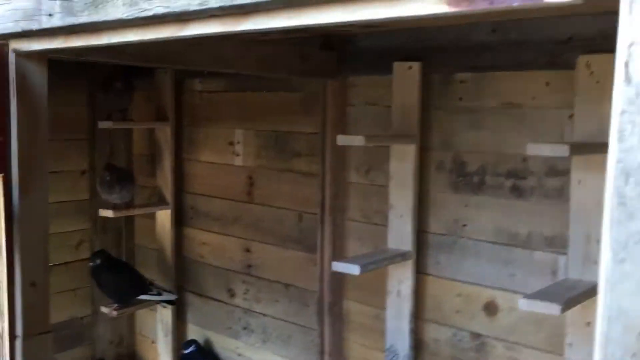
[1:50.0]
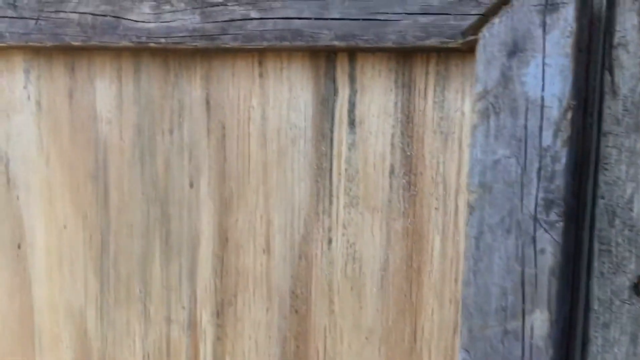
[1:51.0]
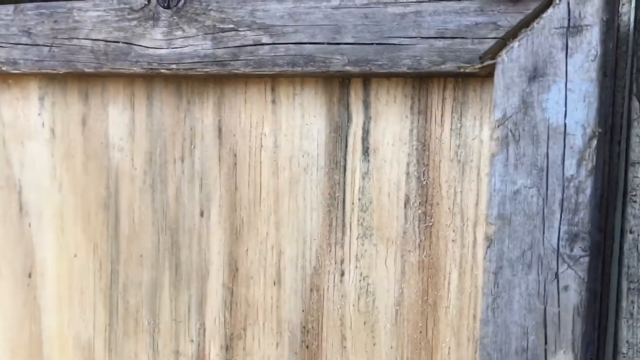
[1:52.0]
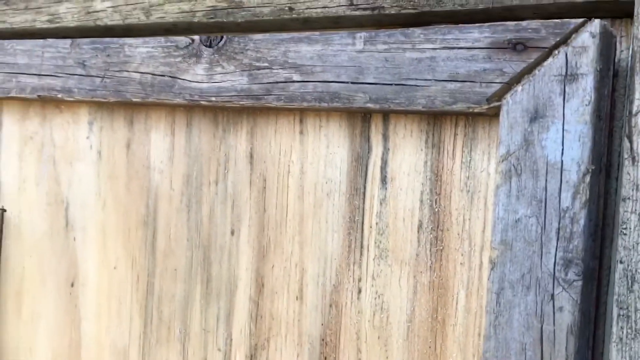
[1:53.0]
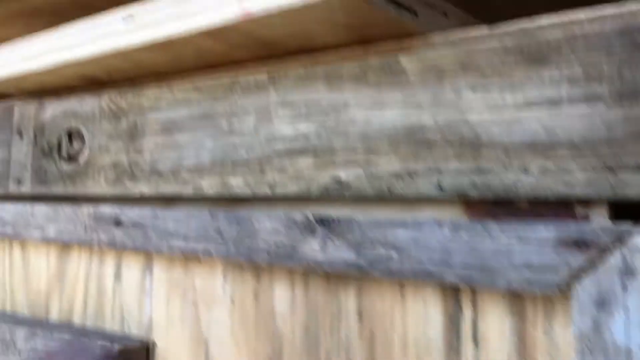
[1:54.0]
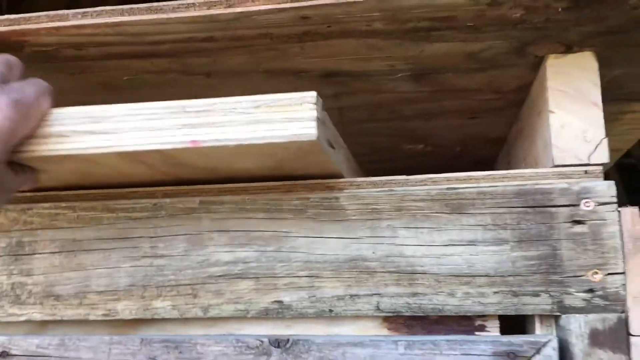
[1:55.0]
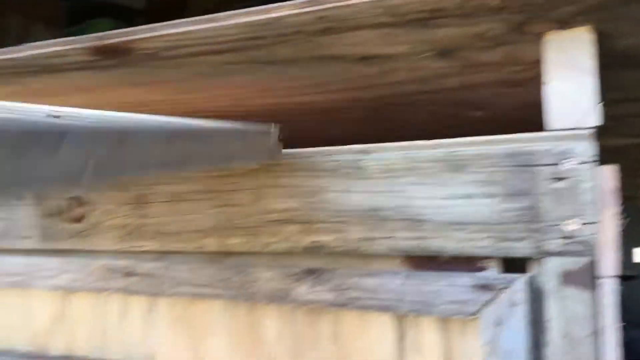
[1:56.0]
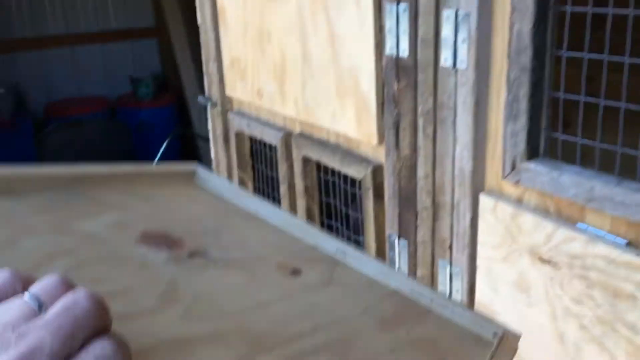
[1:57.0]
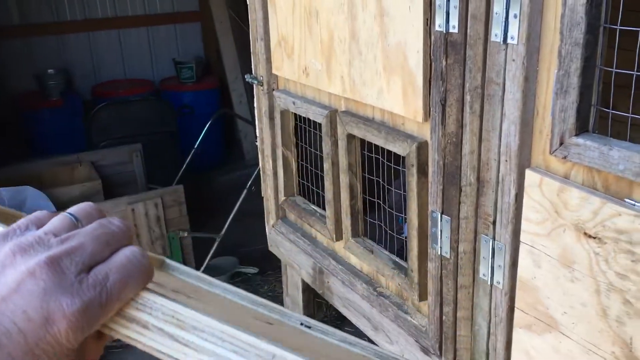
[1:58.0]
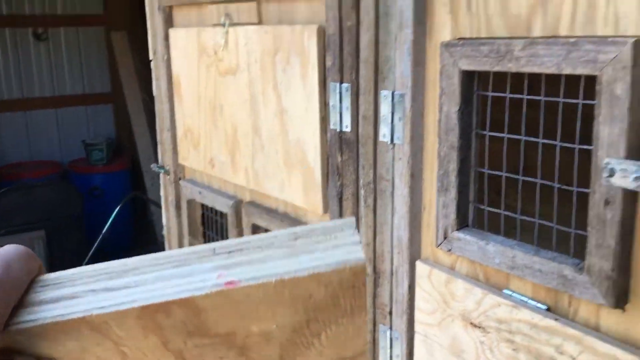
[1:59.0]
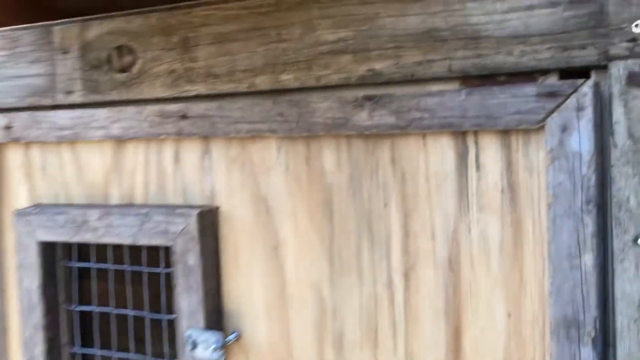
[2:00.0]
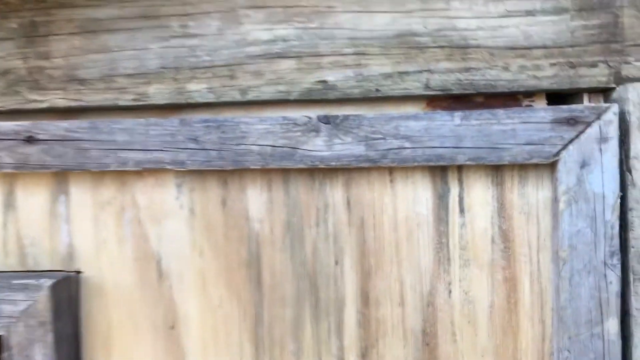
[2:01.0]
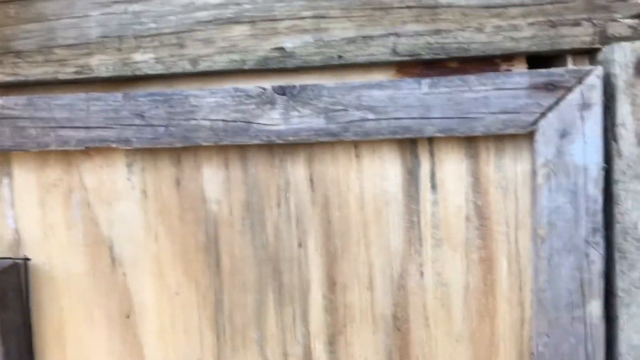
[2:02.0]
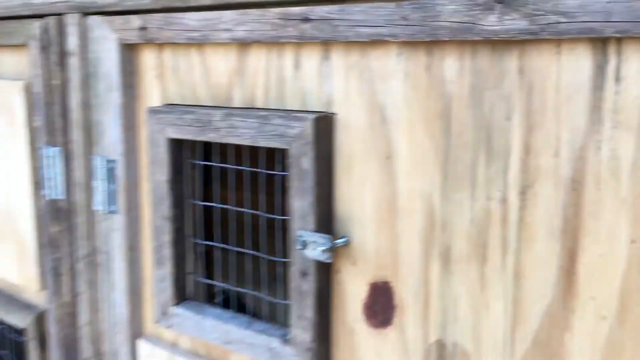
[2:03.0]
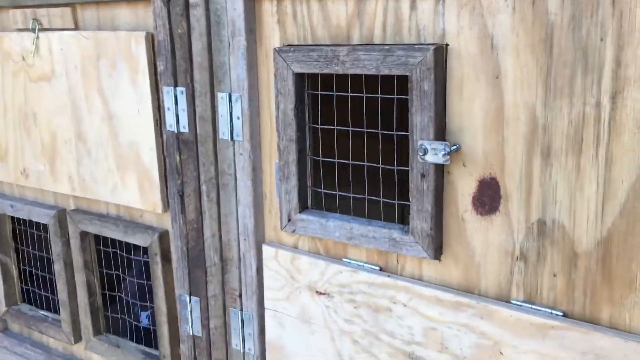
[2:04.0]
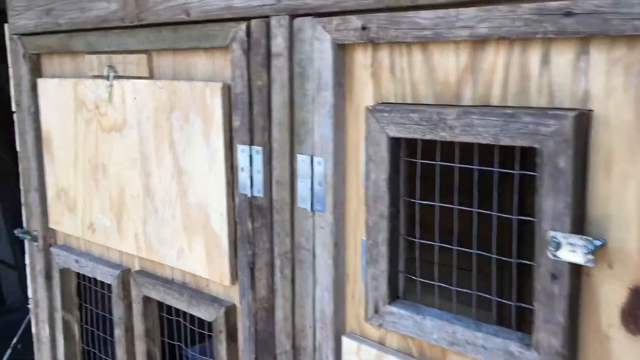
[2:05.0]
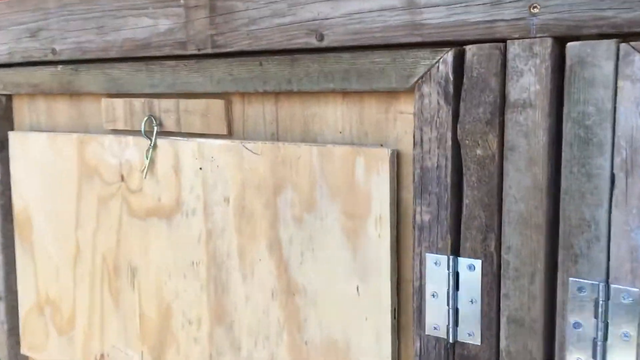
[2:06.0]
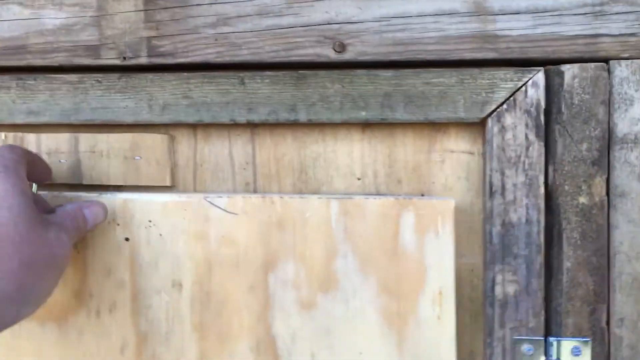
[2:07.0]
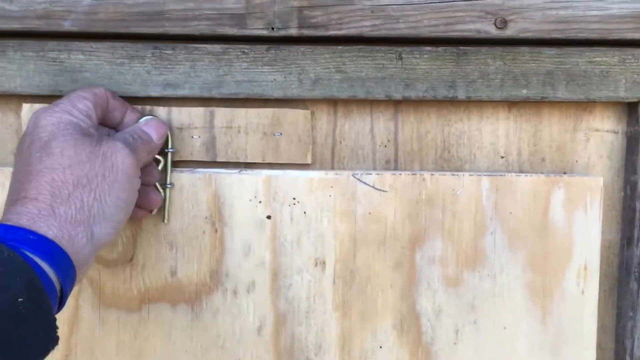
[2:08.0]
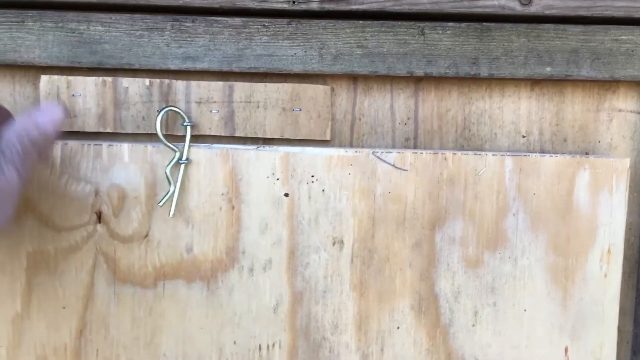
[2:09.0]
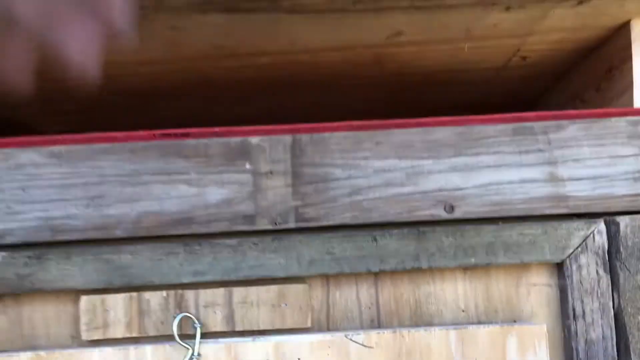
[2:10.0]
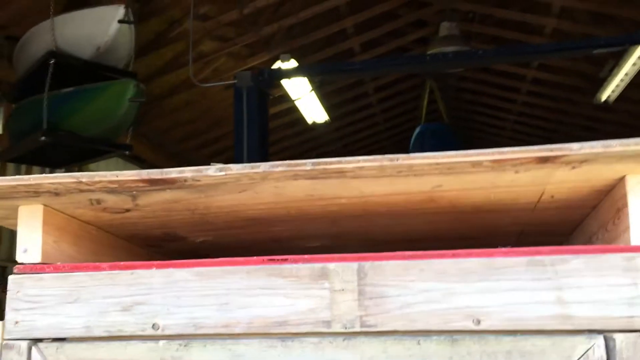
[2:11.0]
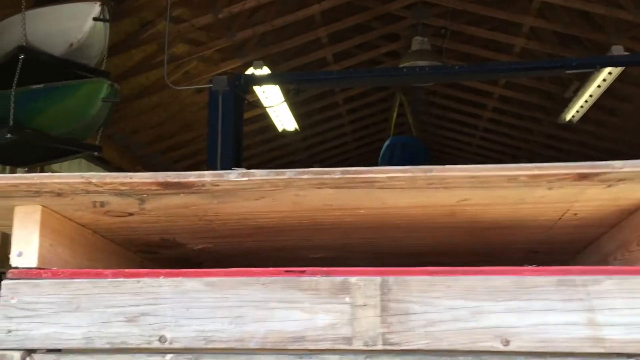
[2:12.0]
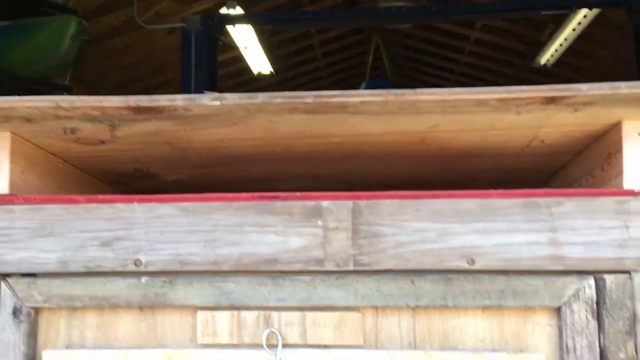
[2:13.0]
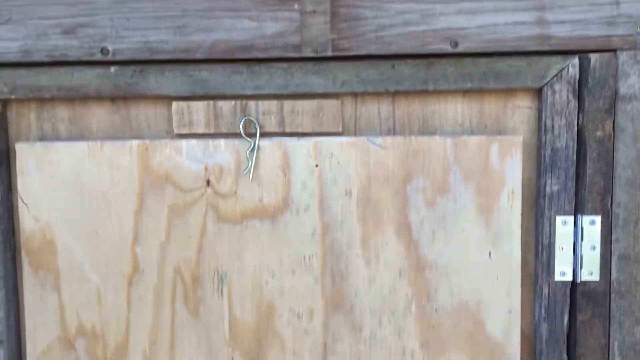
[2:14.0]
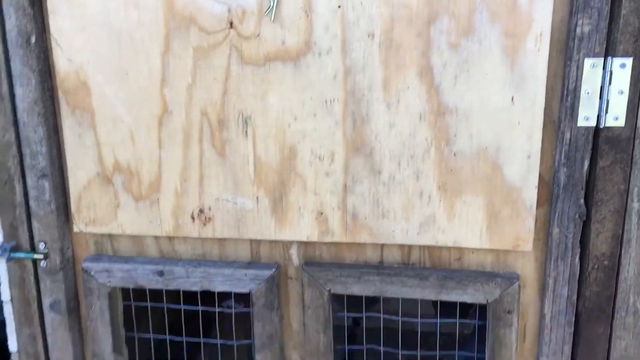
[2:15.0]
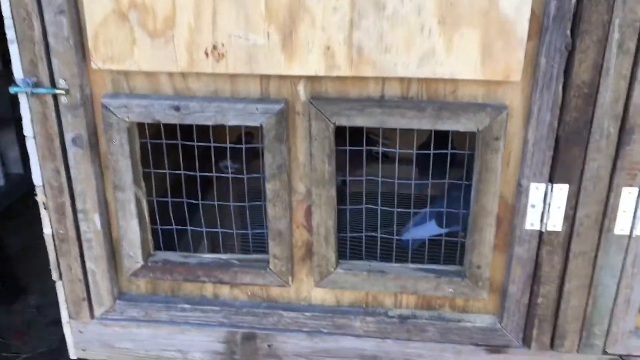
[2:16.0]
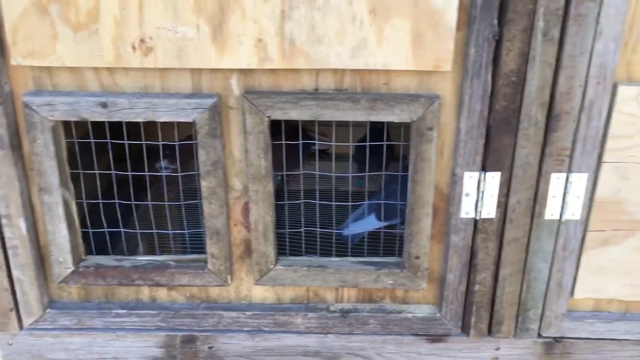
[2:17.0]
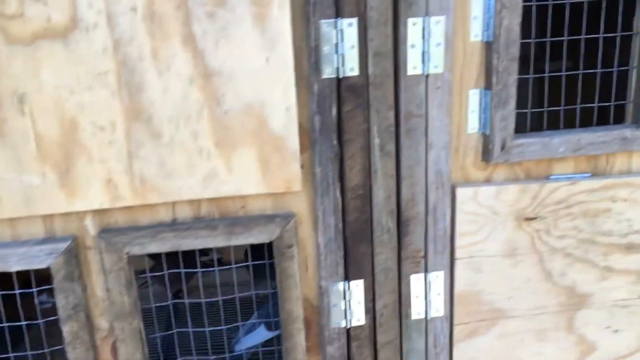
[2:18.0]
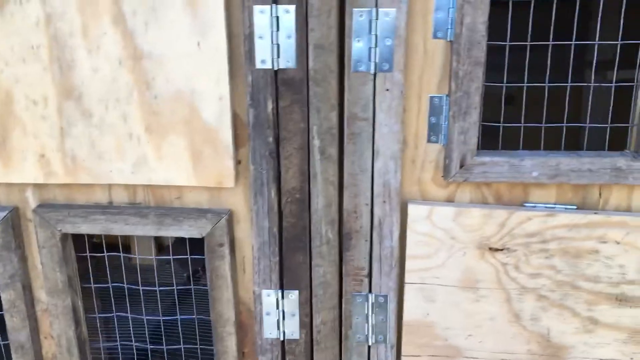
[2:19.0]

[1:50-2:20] The inside of the coop is made entirely of wood, apparently with four or five roosting poles in each of three sets for the pigeons to roost on. The man backs out and shuts the door, then pulls a piece of wood from the top; its purpose is not shown, and he puts it back up. A little lock that can be pulled up is shown, possibly so the door can be pulled down instead of opened like a regular door. He then shows the windows, which have chicken wire on them.